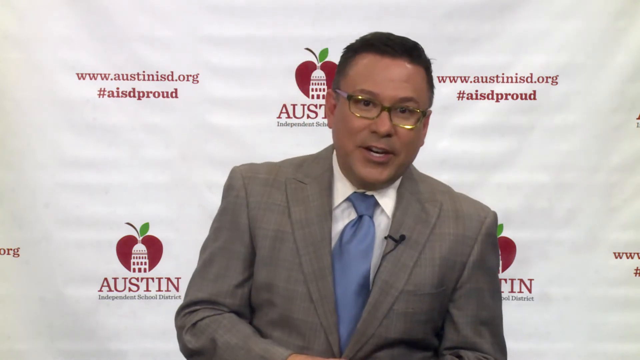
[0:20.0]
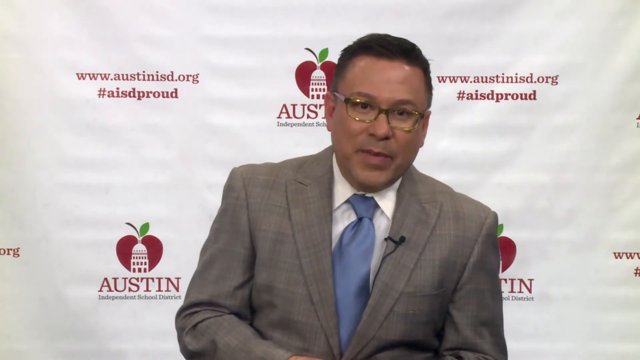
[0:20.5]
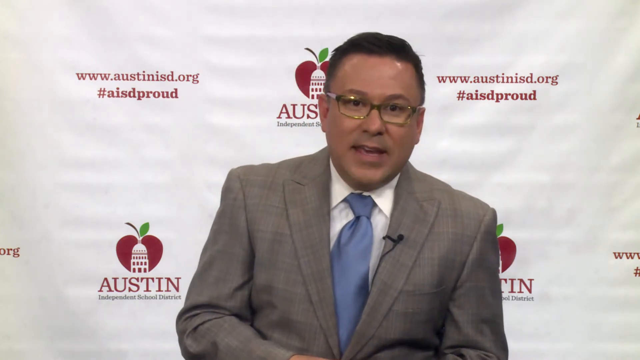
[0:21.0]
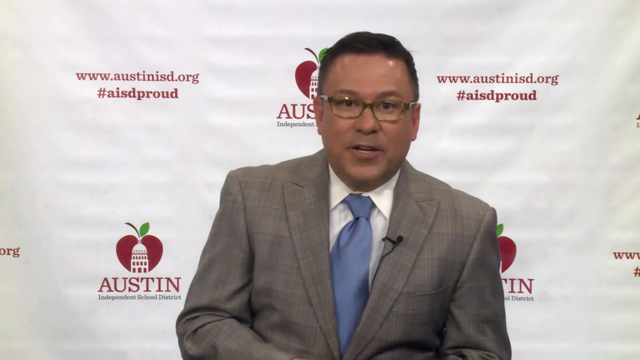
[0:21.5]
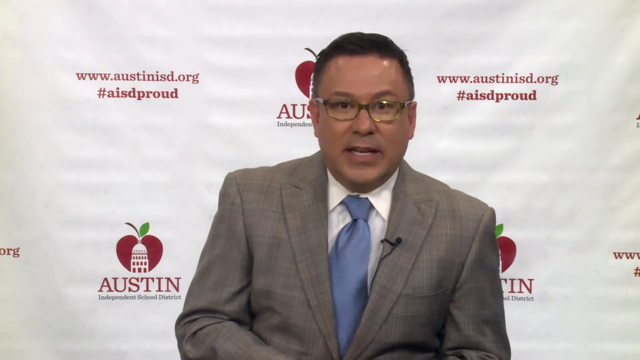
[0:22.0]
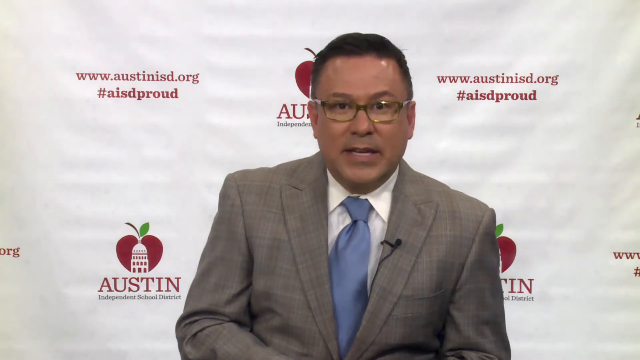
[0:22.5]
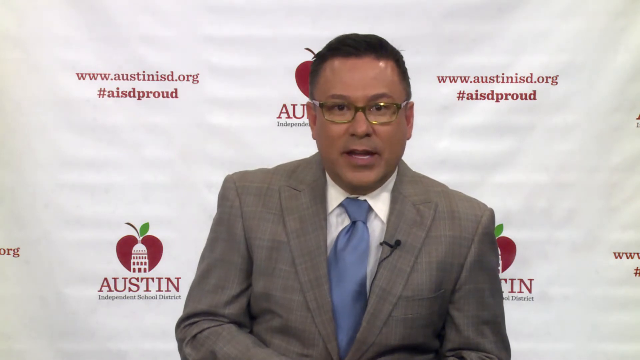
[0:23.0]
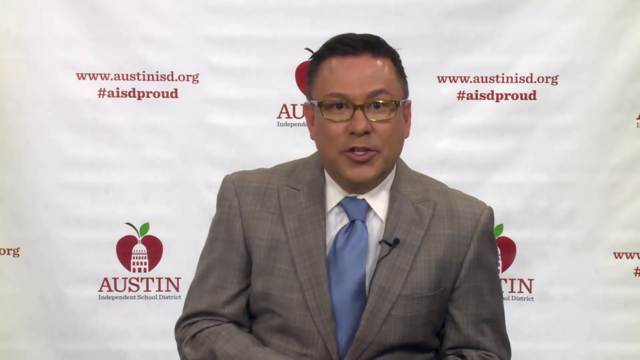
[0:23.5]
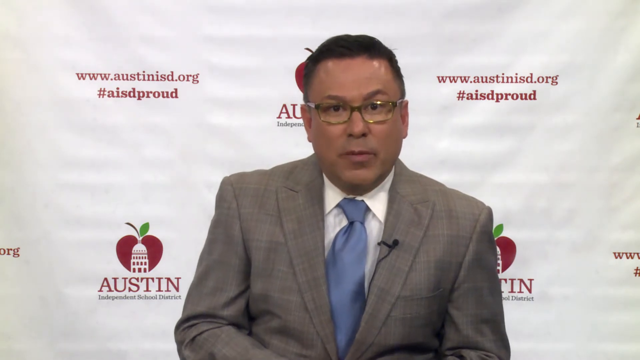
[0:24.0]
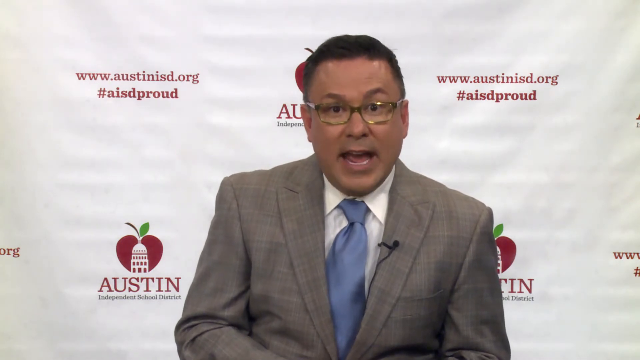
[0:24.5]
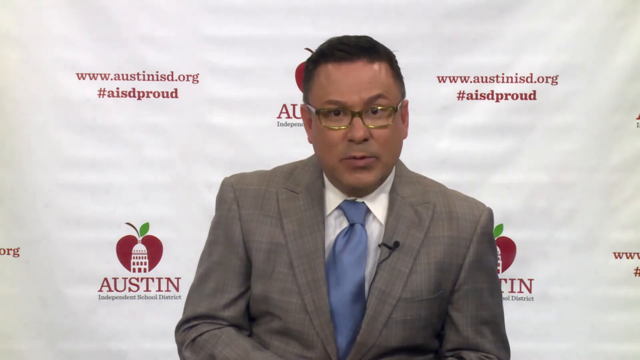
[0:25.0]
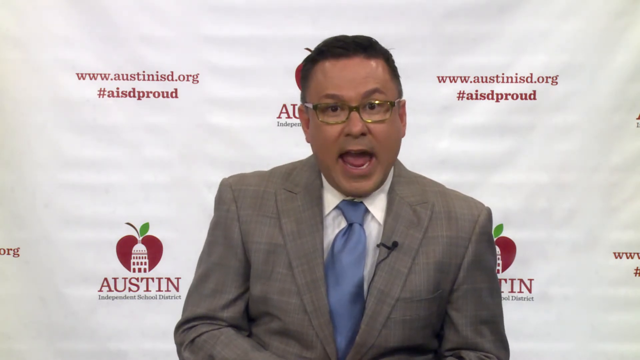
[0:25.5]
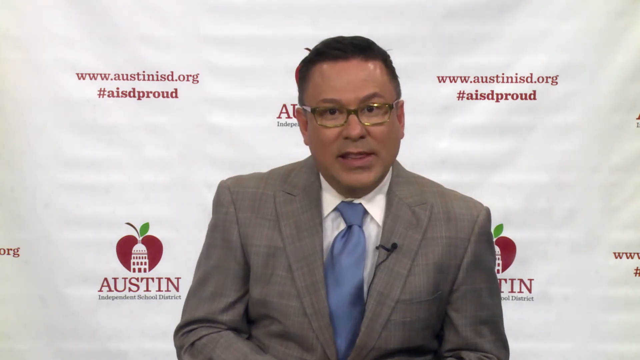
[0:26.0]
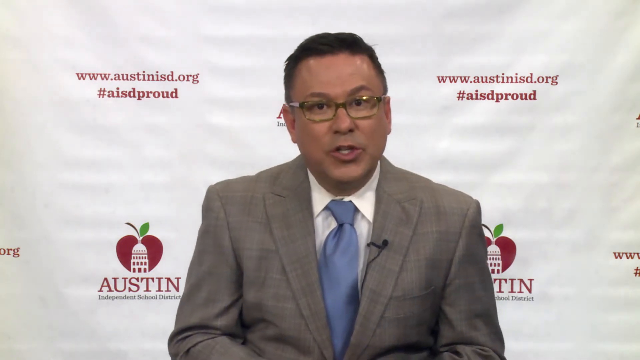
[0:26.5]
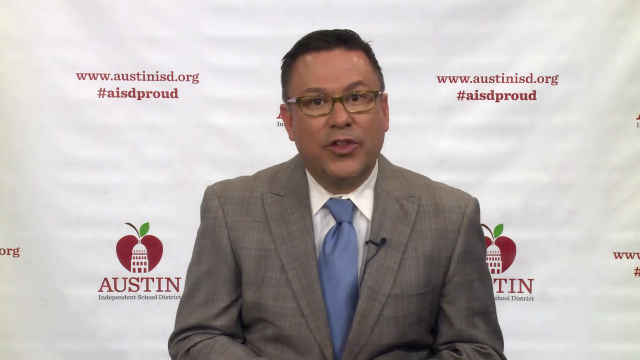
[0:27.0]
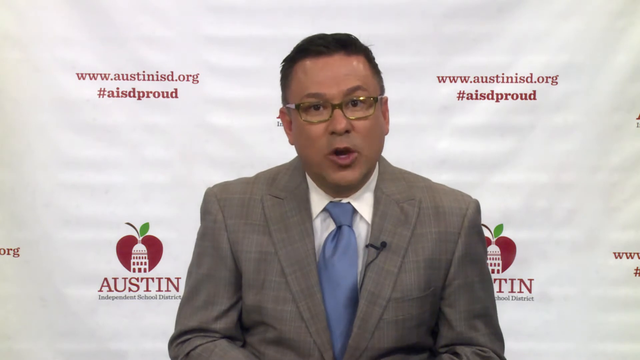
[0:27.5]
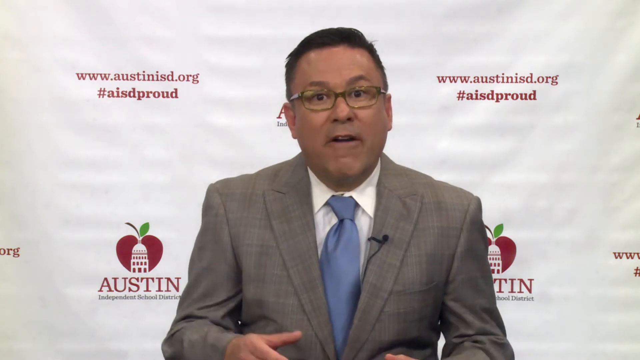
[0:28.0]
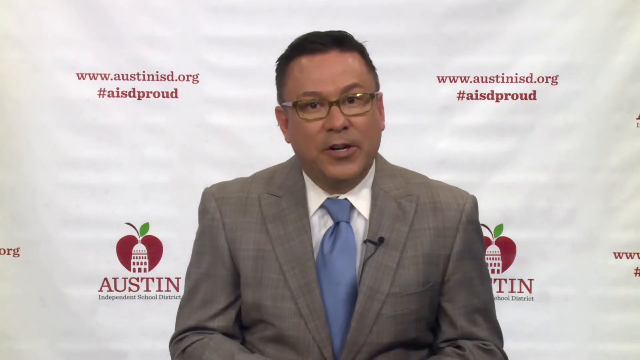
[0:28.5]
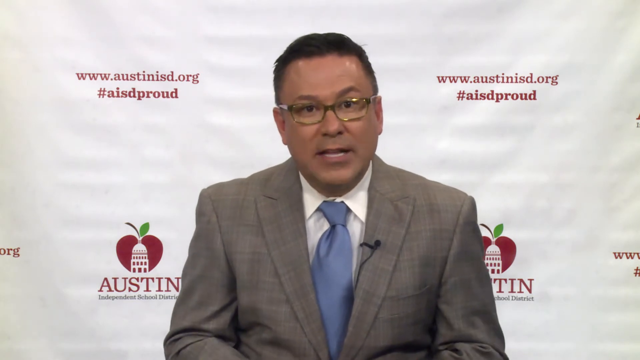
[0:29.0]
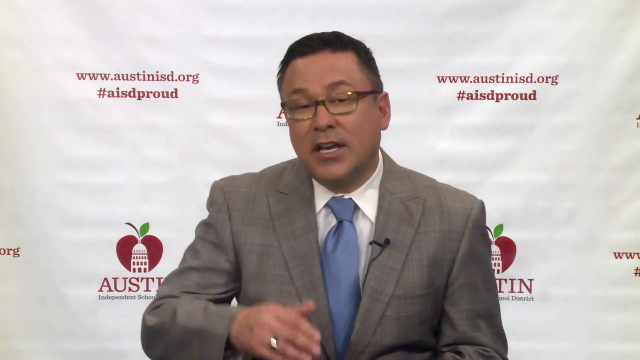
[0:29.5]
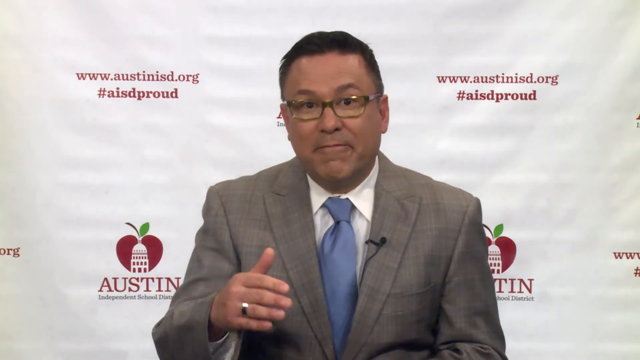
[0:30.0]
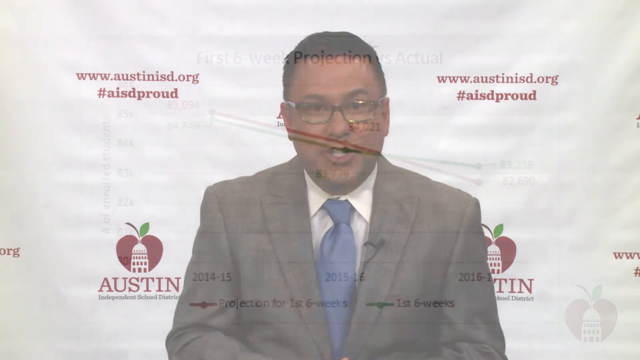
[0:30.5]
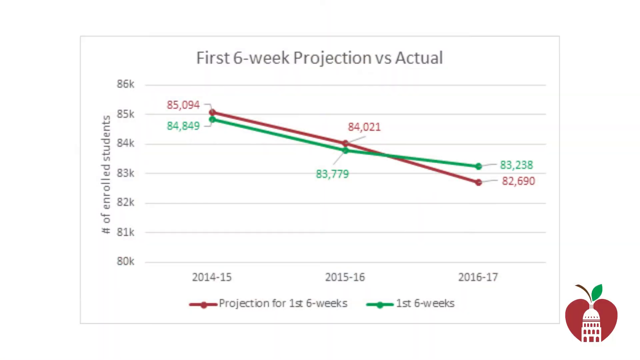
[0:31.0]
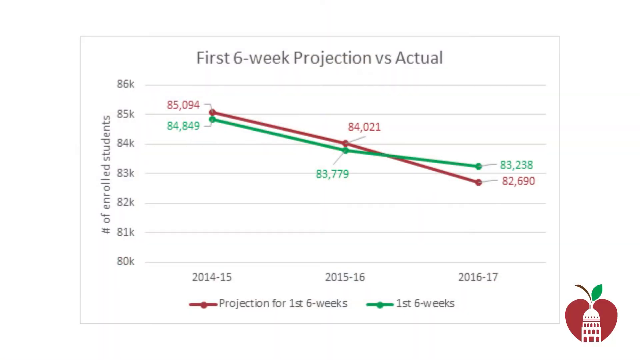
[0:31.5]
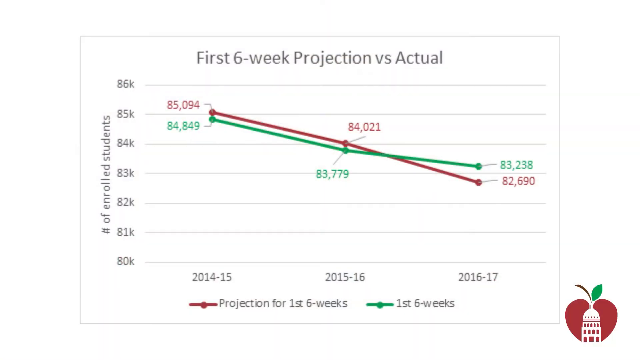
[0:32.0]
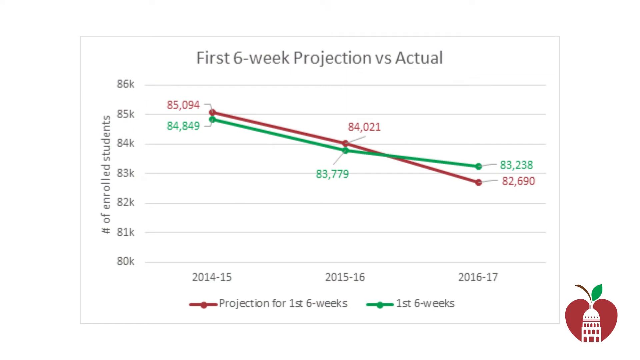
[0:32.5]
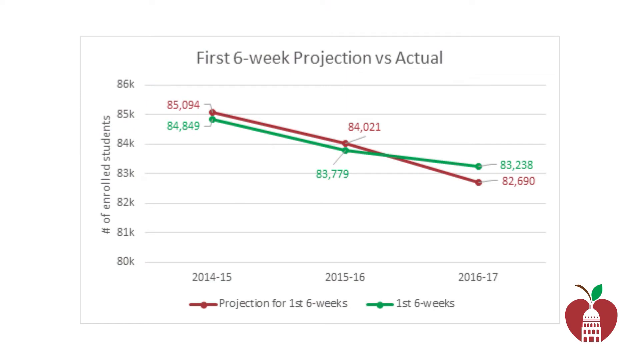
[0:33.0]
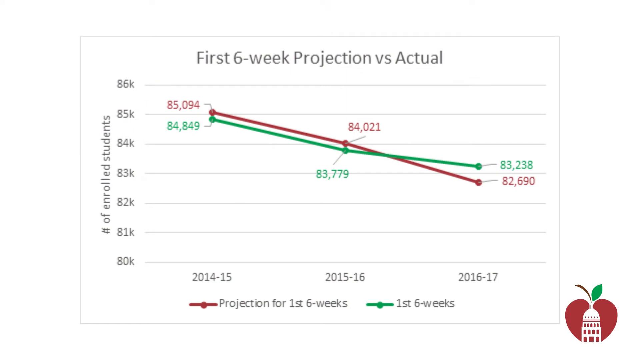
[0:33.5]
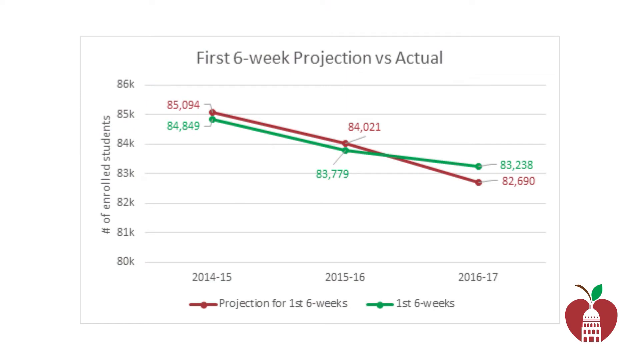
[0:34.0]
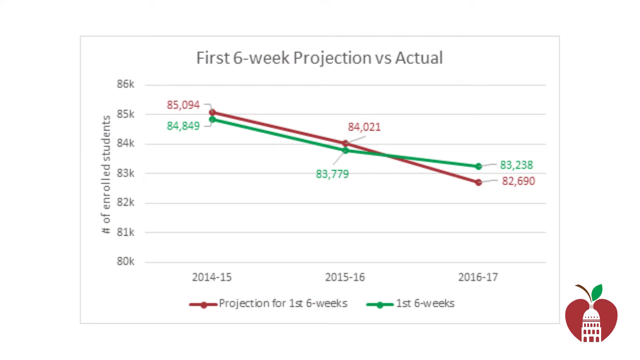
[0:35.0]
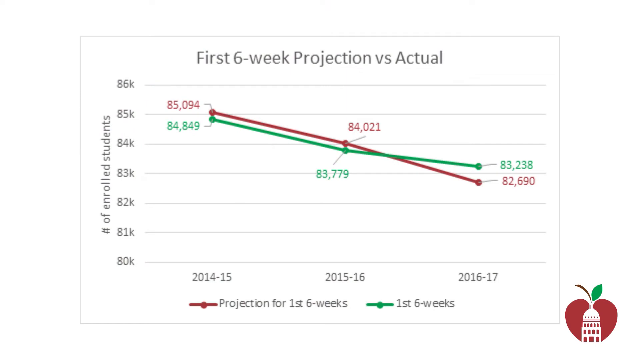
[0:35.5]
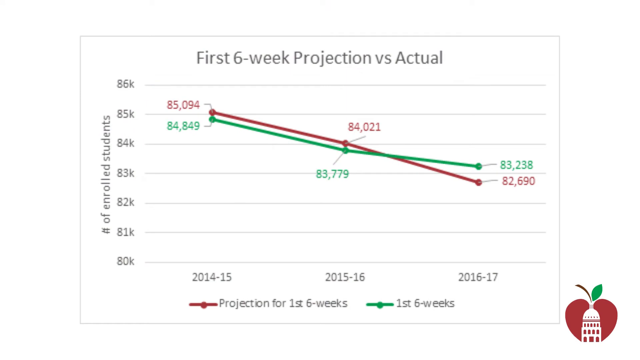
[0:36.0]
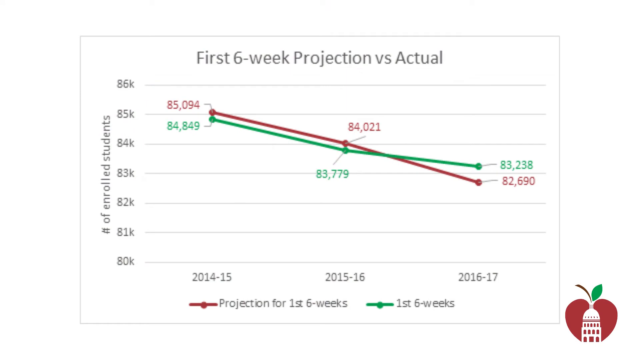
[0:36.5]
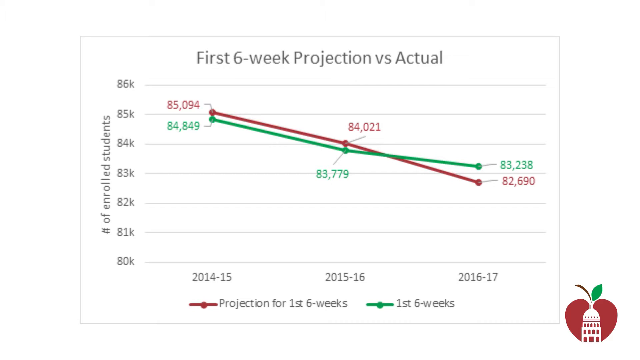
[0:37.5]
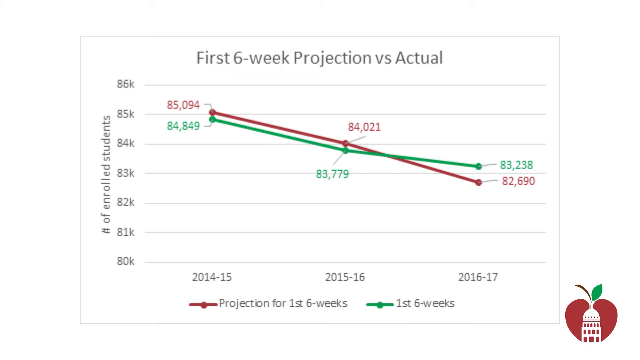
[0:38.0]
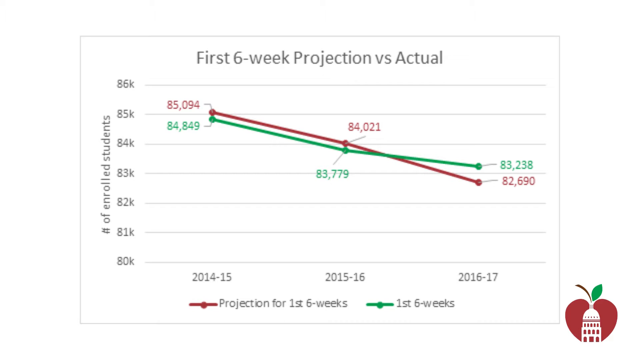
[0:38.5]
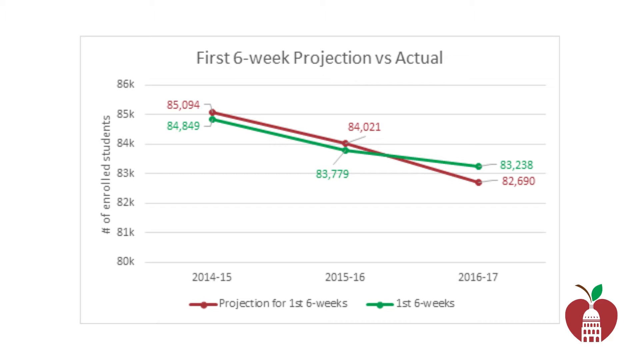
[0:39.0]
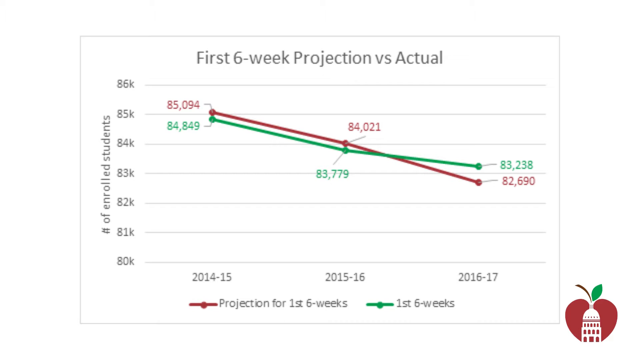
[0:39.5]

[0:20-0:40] A man in something like a gray jacket or blazer, a blue tie and a white shirt, with a microphone attached to the inside of his blazer and wearing glasses, talks in front of a white background that reads "Austin Independent School District." He is apparently a superintendent or something similar. He talks with his hands a little and wears a wedding ring. A small chart then appears, titled "first six-week projection versus actual," showing the number of enrolled students for the first six weeks over three years, from 2014 to 2017. In 2014–2015 and 2015–2016 the figures are a little under the projection, while in 2016–2017 they are over.